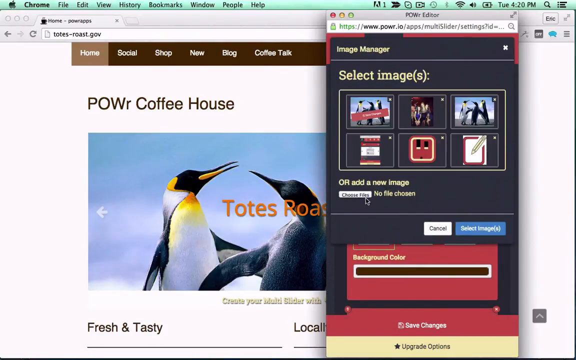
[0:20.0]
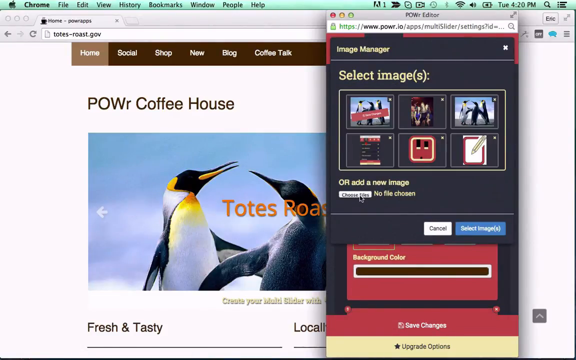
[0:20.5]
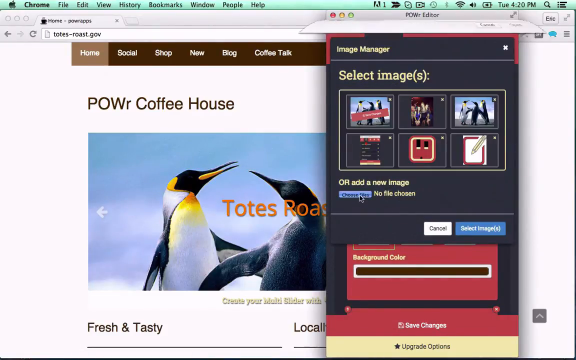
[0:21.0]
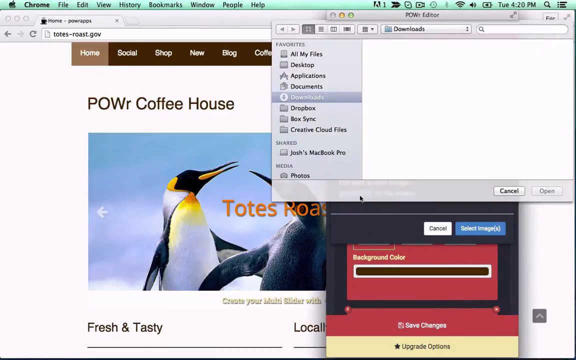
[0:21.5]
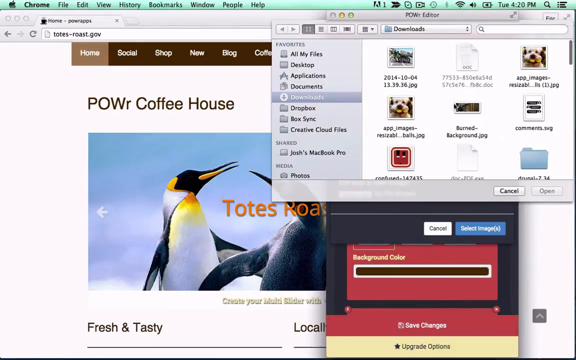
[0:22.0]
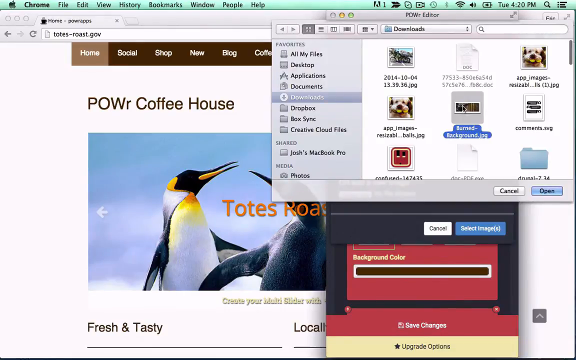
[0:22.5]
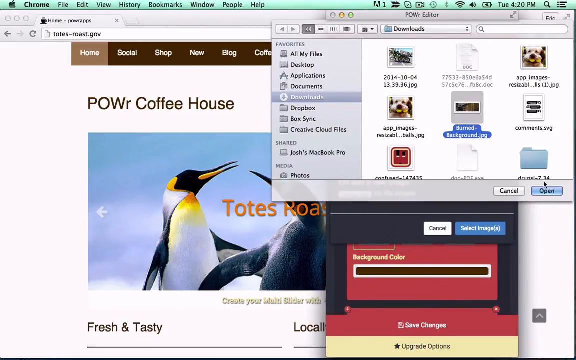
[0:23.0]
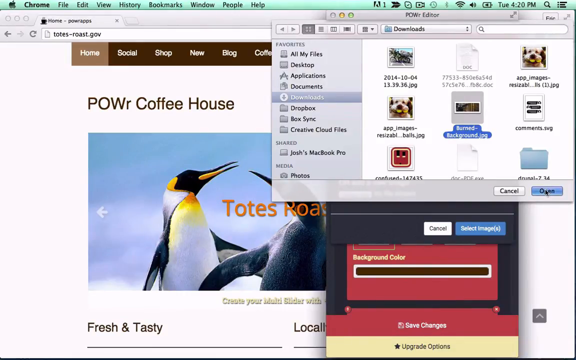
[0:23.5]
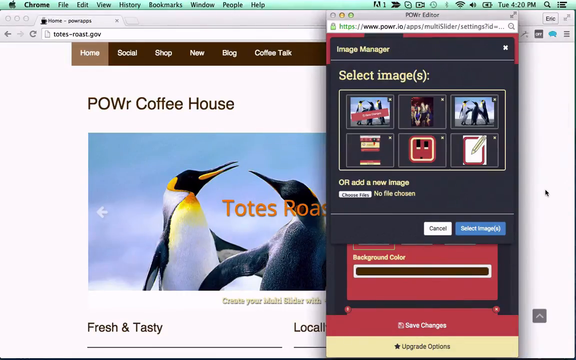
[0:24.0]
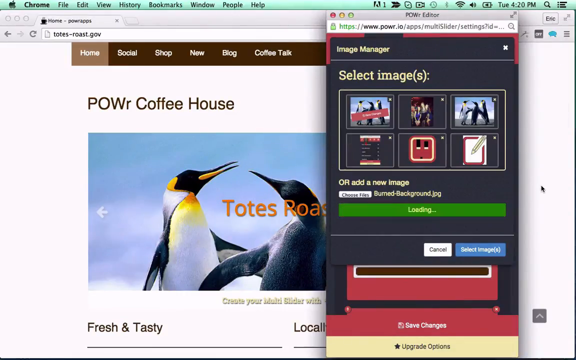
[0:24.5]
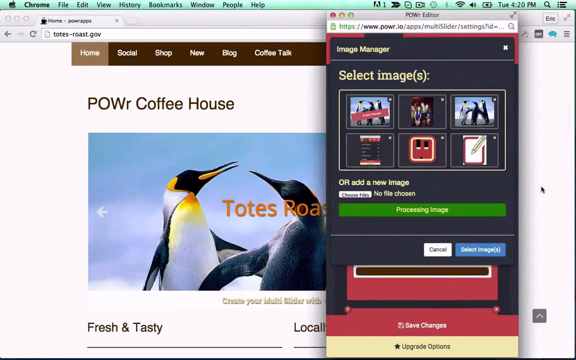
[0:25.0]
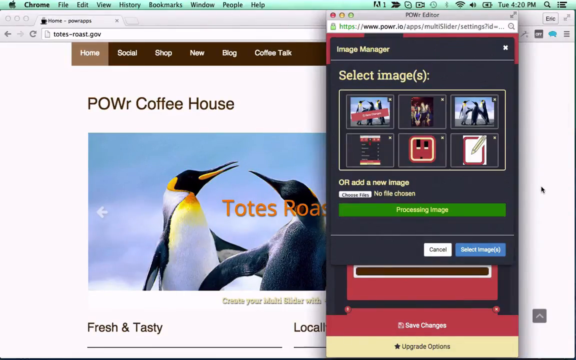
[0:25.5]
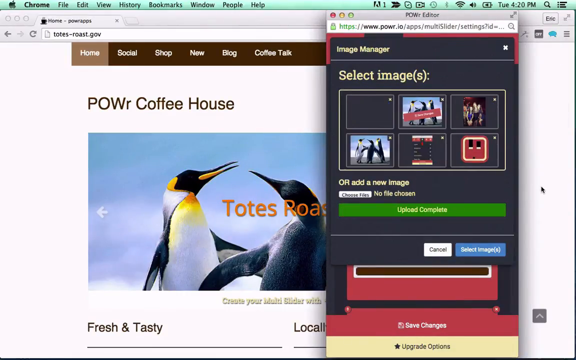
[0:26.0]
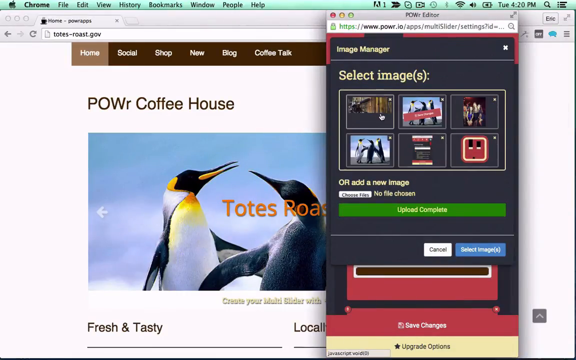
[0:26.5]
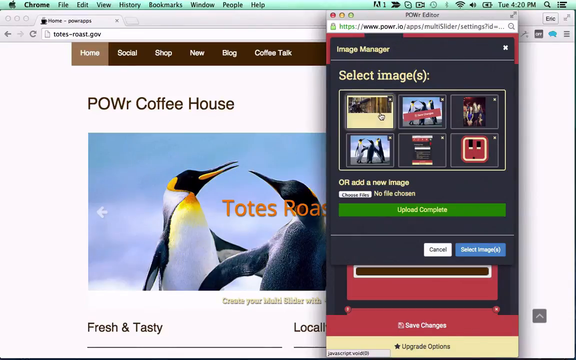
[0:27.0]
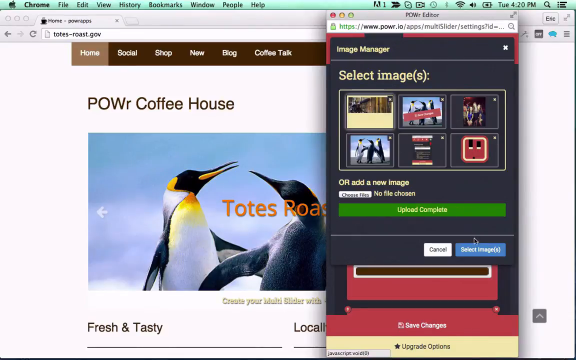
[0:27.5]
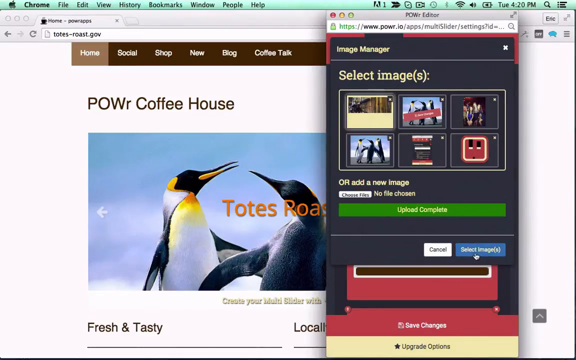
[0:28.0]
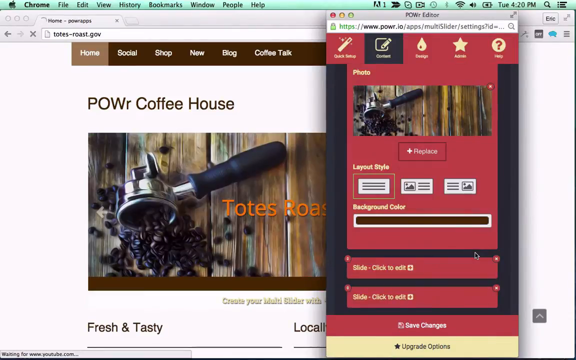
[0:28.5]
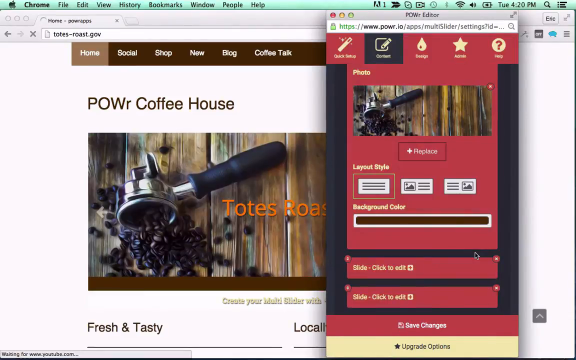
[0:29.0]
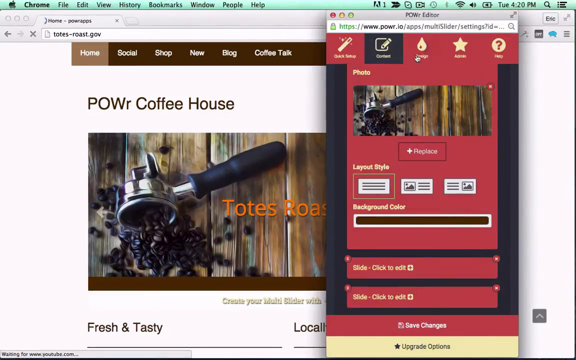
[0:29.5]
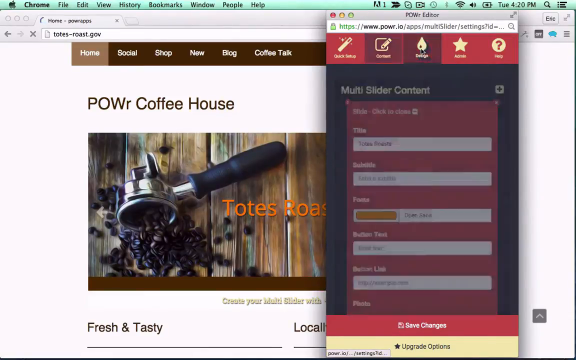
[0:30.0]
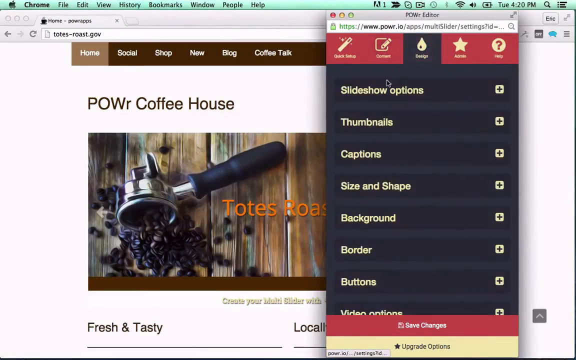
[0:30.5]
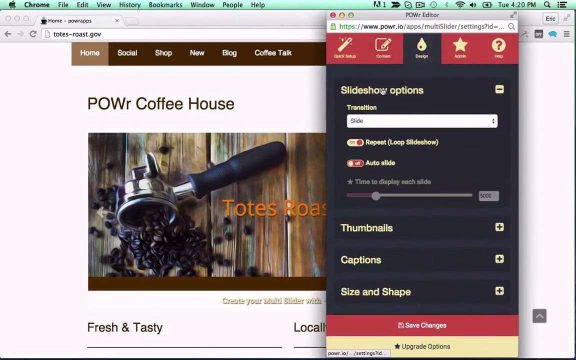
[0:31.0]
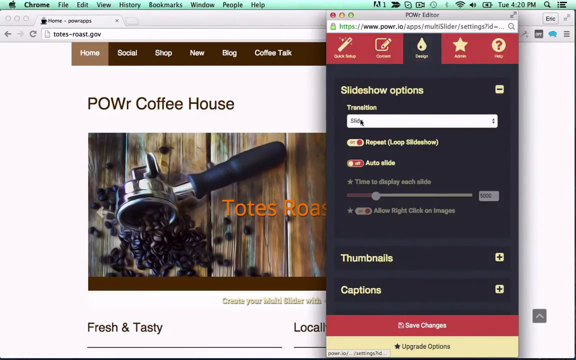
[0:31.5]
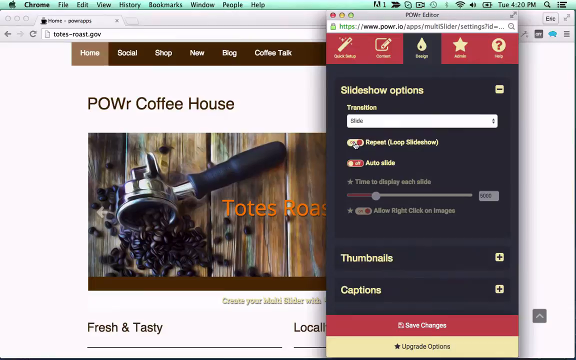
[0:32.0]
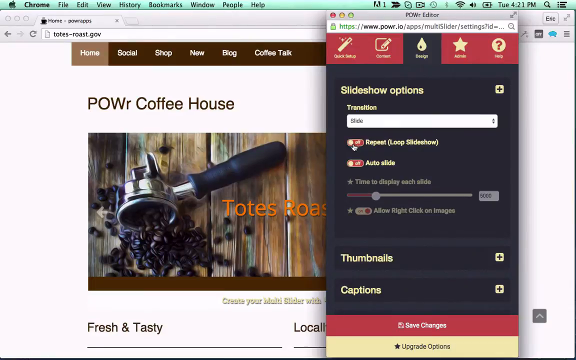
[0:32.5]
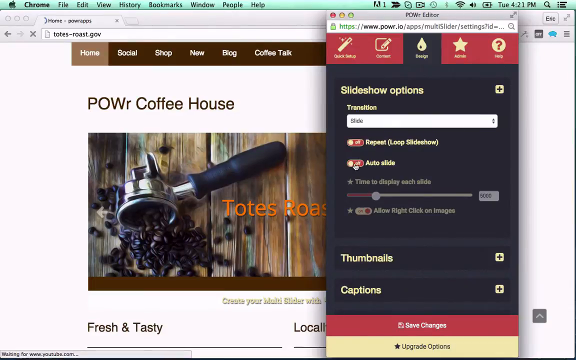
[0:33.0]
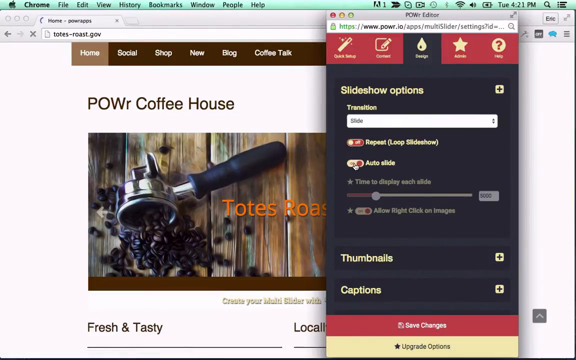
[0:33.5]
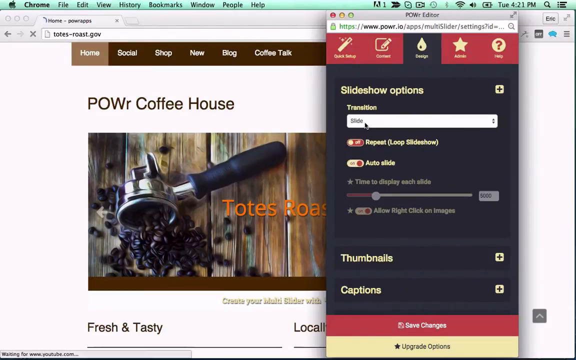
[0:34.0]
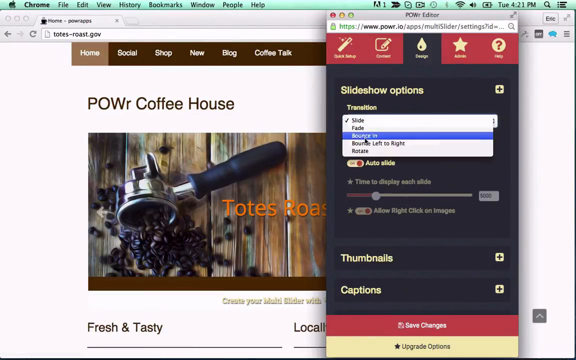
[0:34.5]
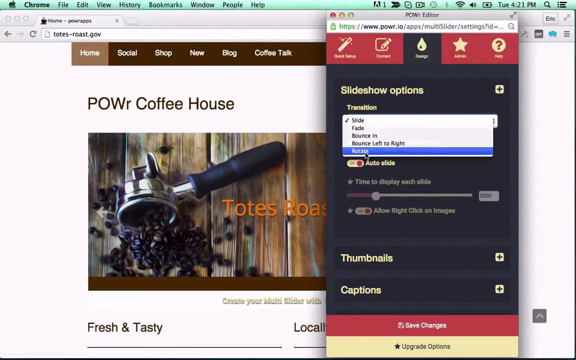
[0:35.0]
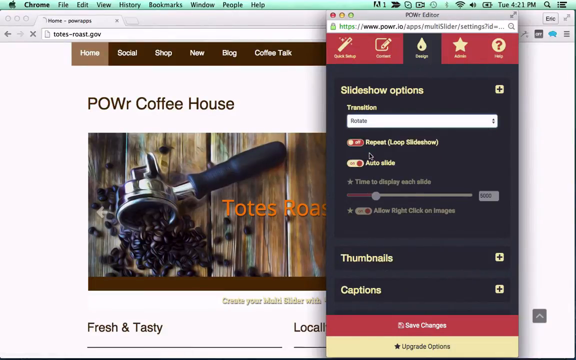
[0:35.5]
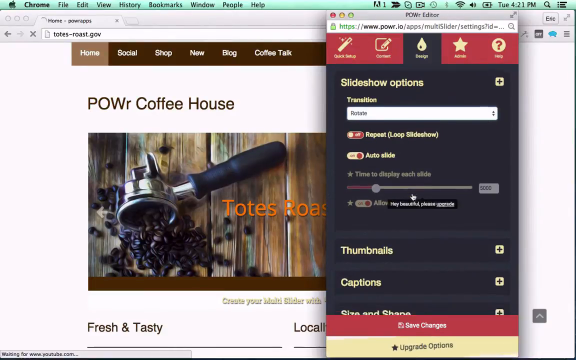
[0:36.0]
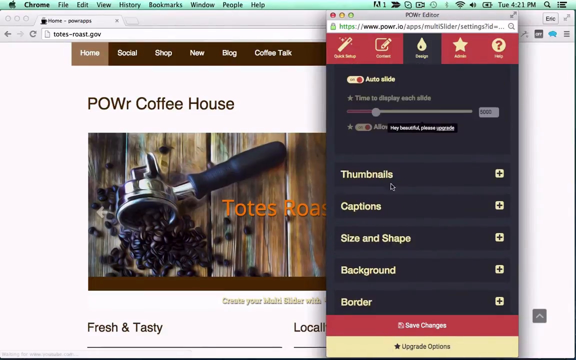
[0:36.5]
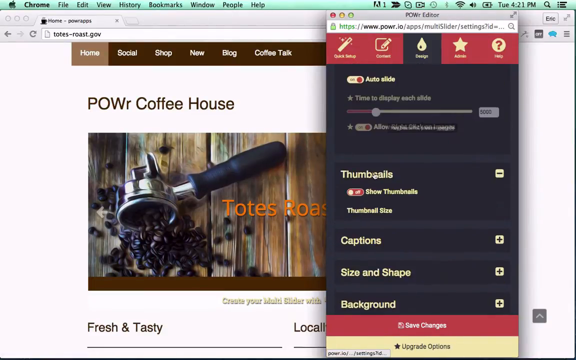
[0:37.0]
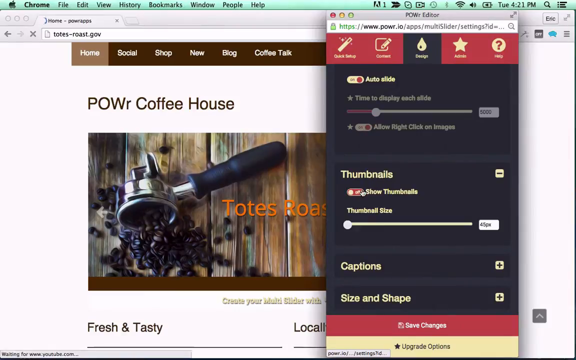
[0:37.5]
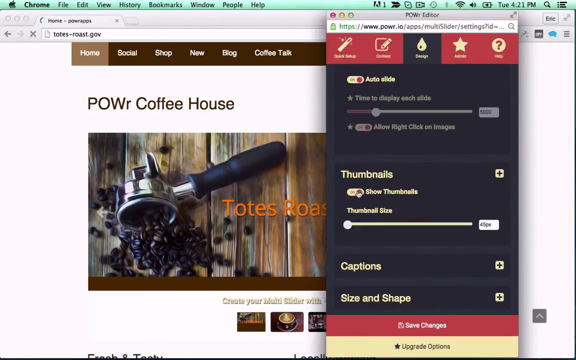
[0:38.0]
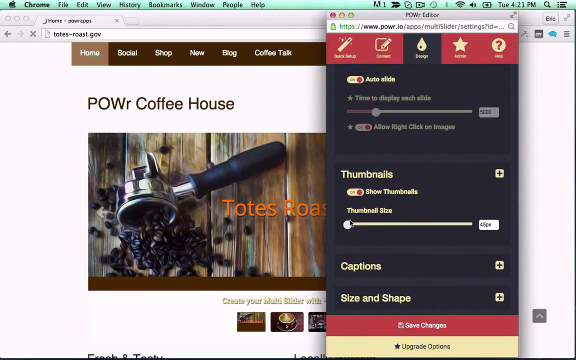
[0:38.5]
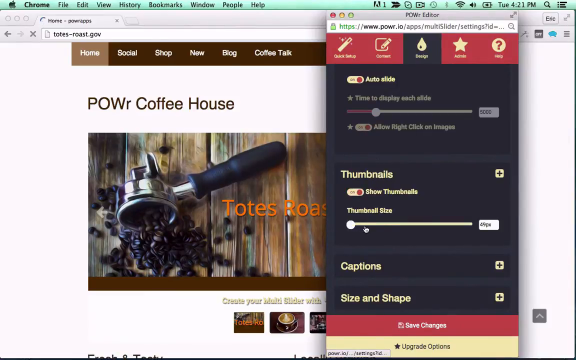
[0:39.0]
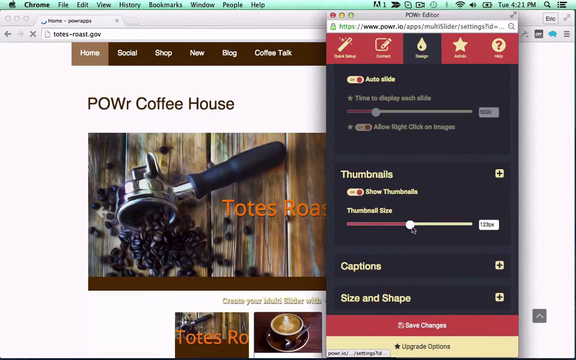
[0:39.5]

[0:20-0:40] In the editor, images is selected and choose file is clicked, opening a file explorer. An image in the downloads folder is clicked and opened, and a green "processing image" bar appears. The image shows up in the gallery; it is clicked and select import is chosen. The image shows the handle scoop of an espresso machine with coffee inside spilling onto a wooden table. The content section is closed and the design section is opened, where the transition can be changed: repeat loop slideshow is turned off, auto slide is turned on, and under transition, rotate is chosen. Below that, under thumbnails, thumbnails are turned on and the thumbnail size is increased. The top of the POWr editor has five menu items: on the left "quick setup", "content" and "design"; on the right a star with unreadable text; and on the far right a question mark for help.